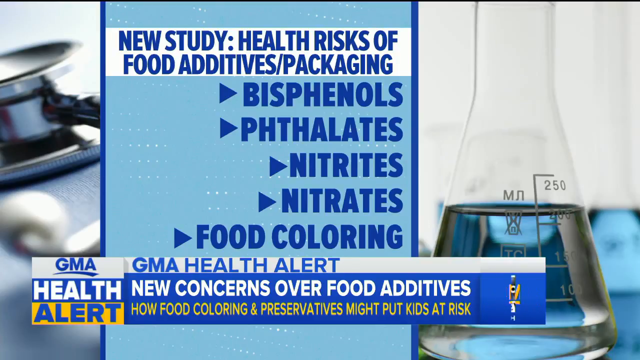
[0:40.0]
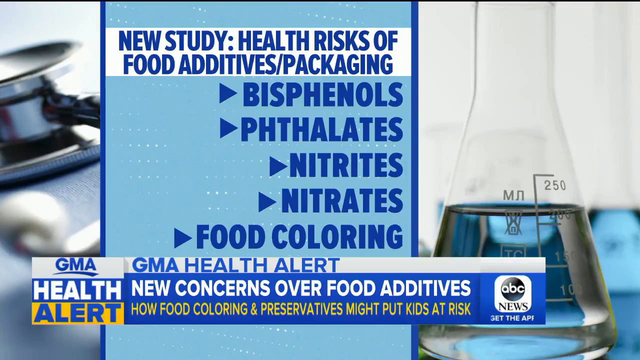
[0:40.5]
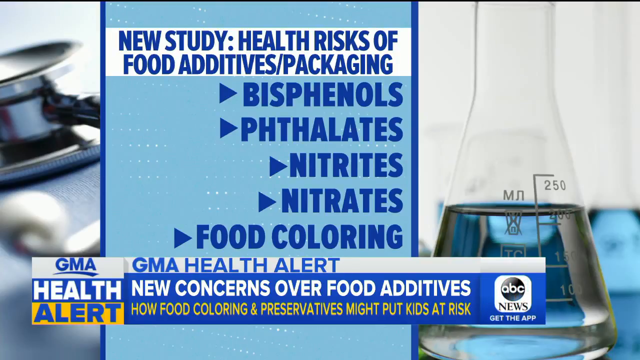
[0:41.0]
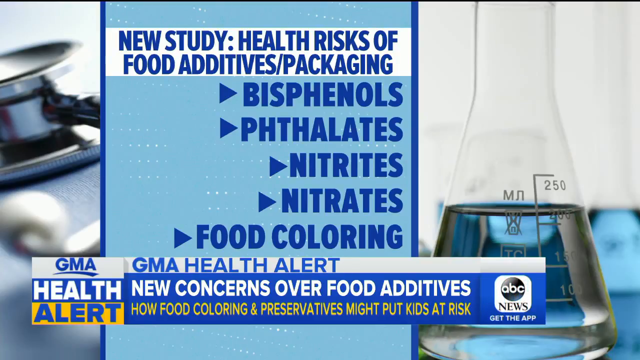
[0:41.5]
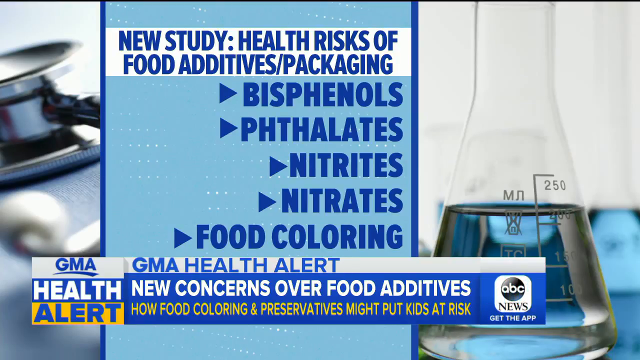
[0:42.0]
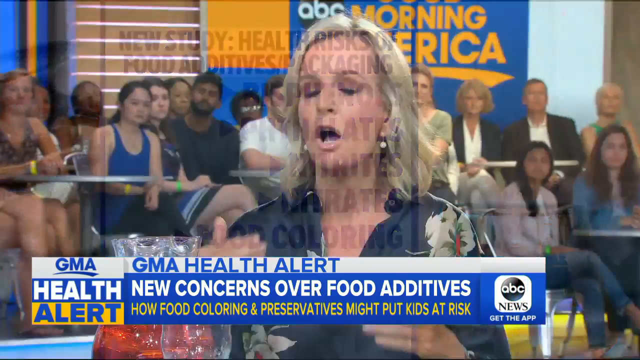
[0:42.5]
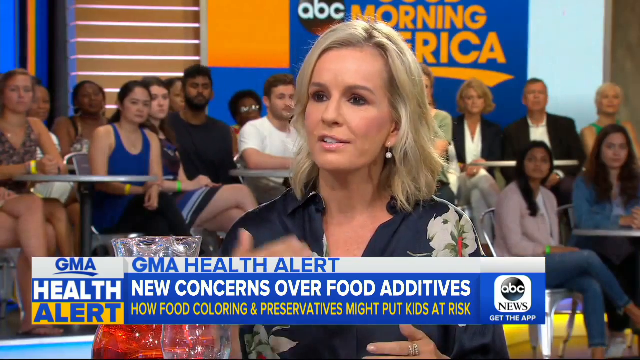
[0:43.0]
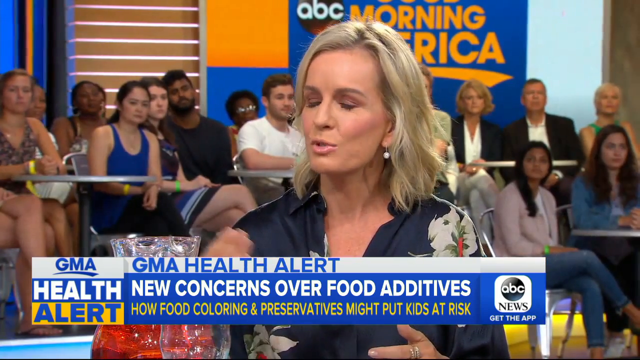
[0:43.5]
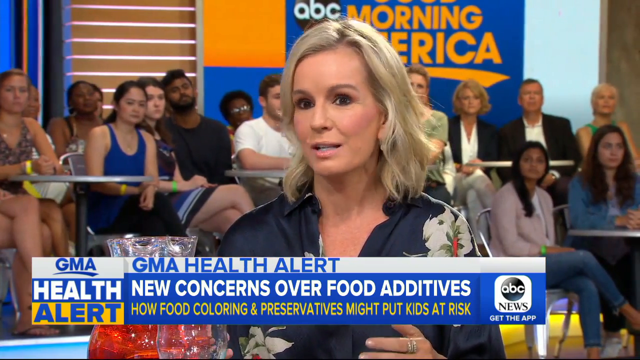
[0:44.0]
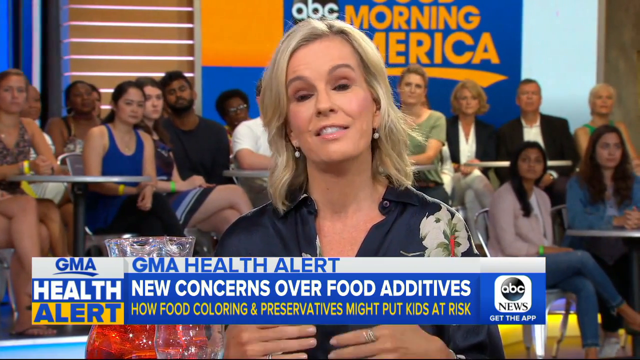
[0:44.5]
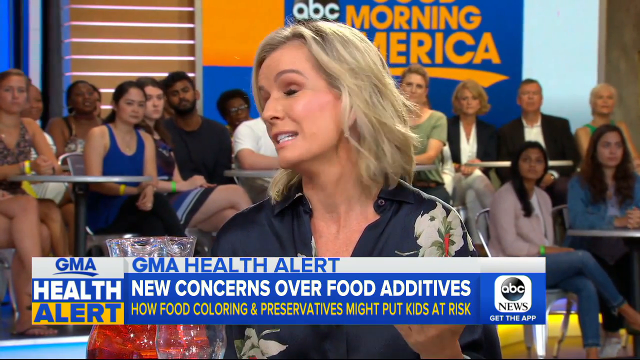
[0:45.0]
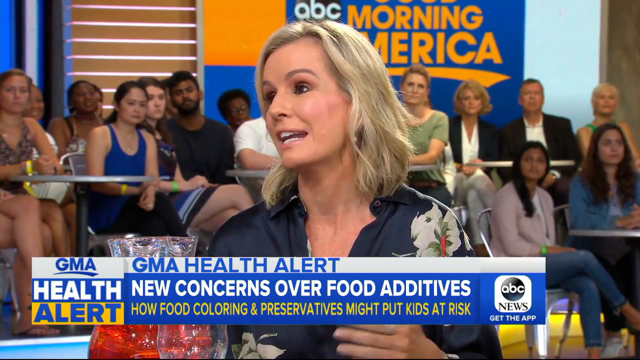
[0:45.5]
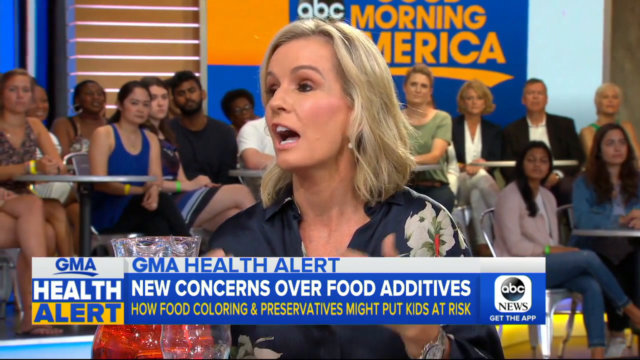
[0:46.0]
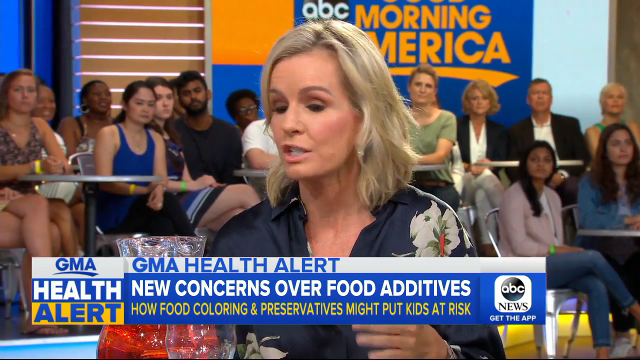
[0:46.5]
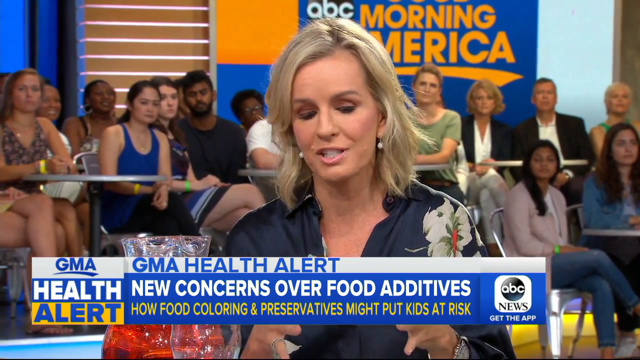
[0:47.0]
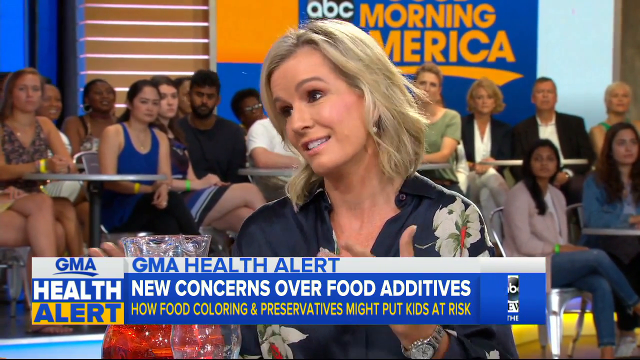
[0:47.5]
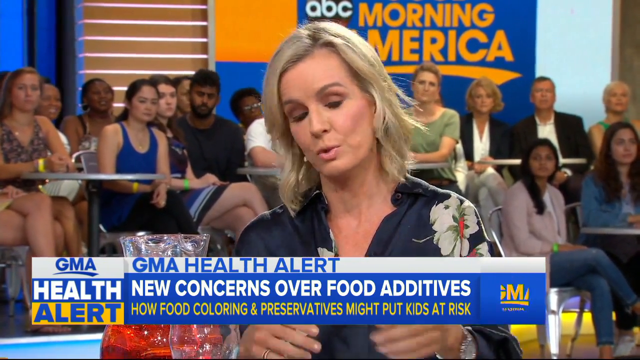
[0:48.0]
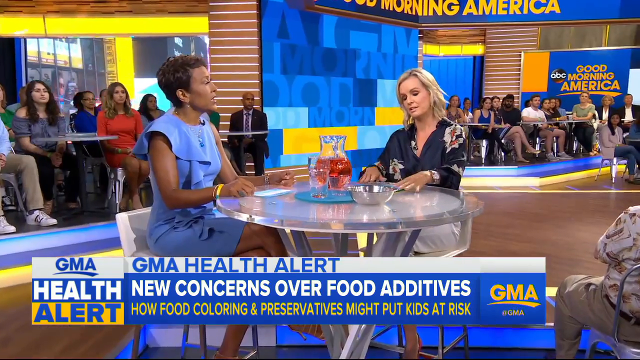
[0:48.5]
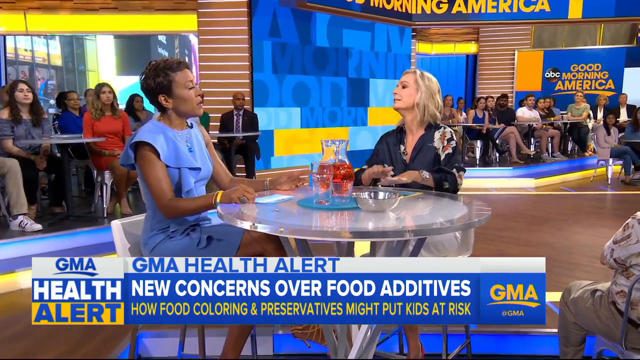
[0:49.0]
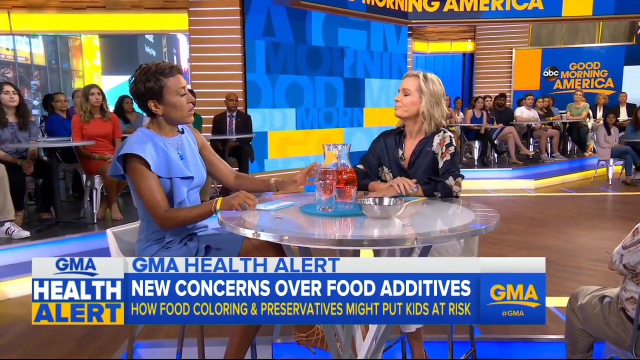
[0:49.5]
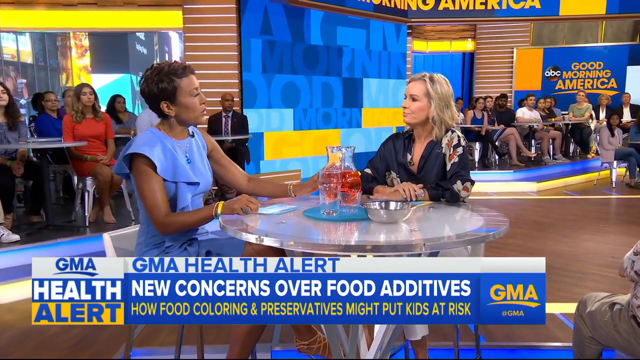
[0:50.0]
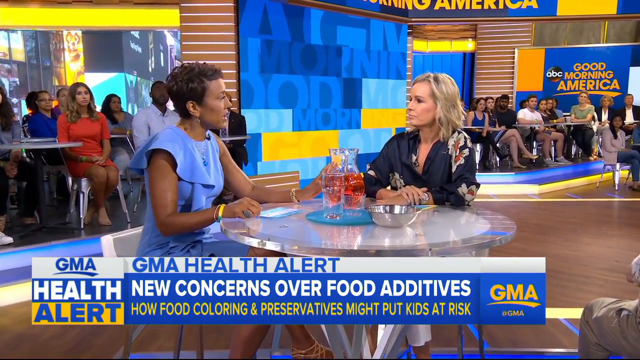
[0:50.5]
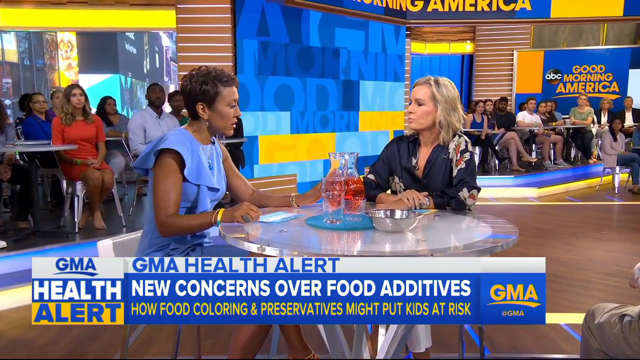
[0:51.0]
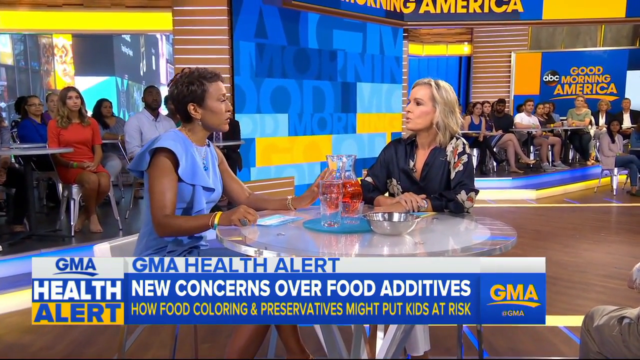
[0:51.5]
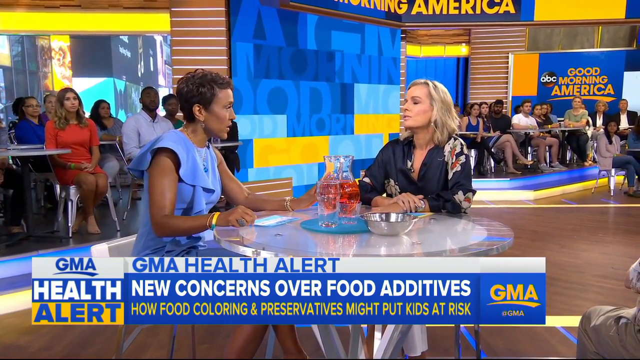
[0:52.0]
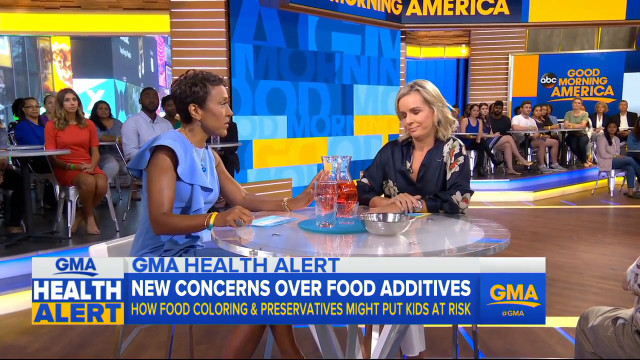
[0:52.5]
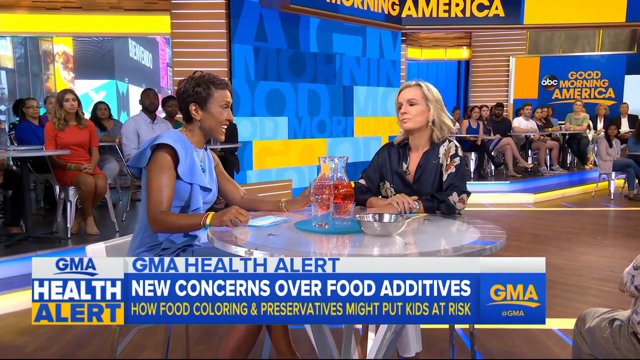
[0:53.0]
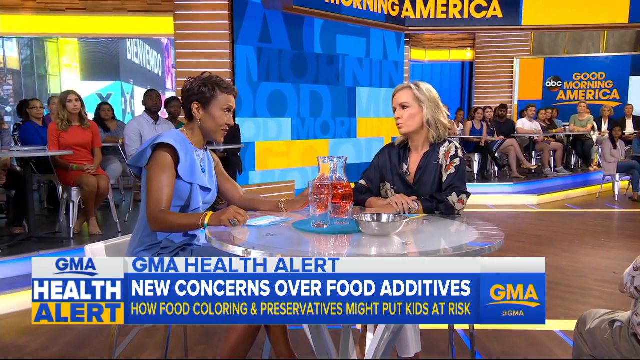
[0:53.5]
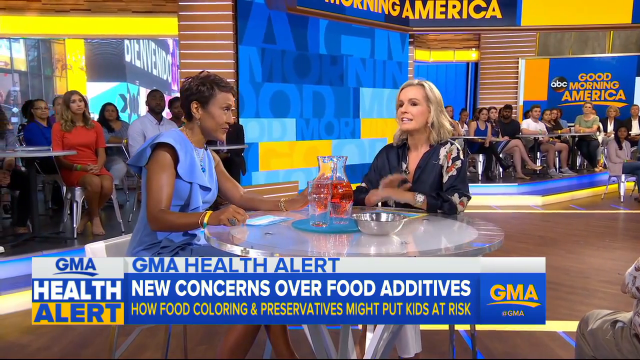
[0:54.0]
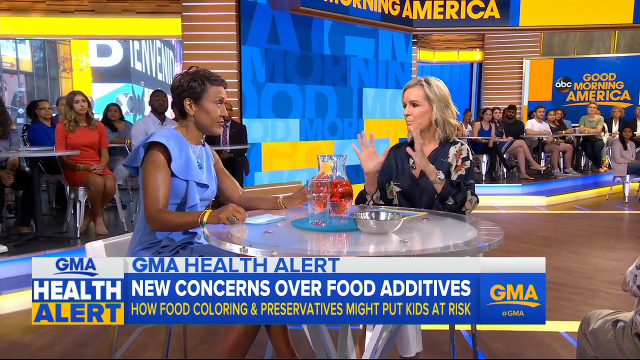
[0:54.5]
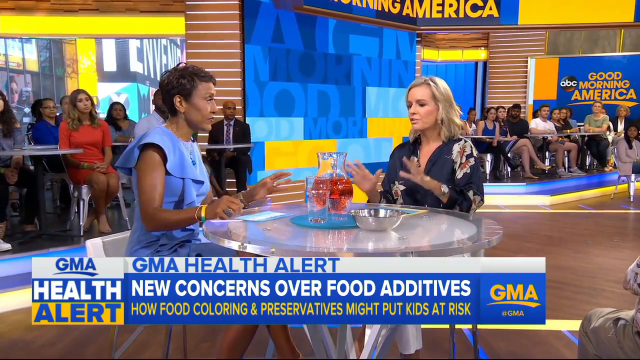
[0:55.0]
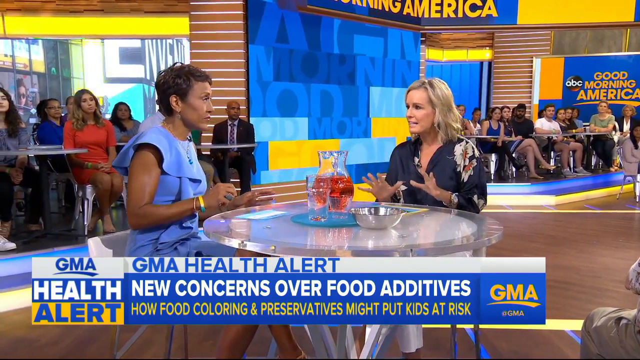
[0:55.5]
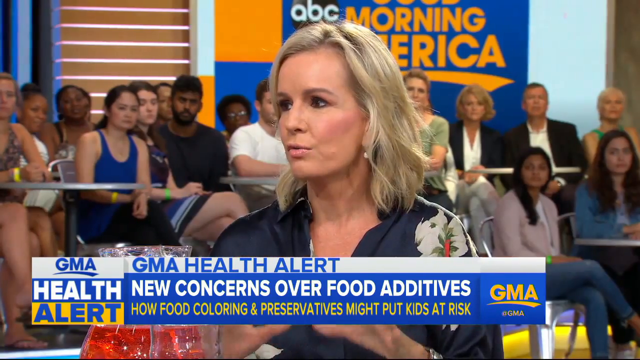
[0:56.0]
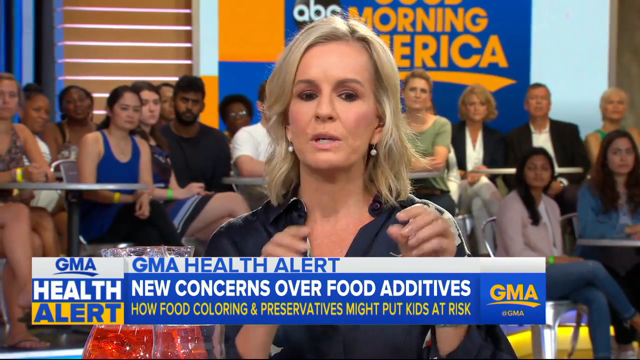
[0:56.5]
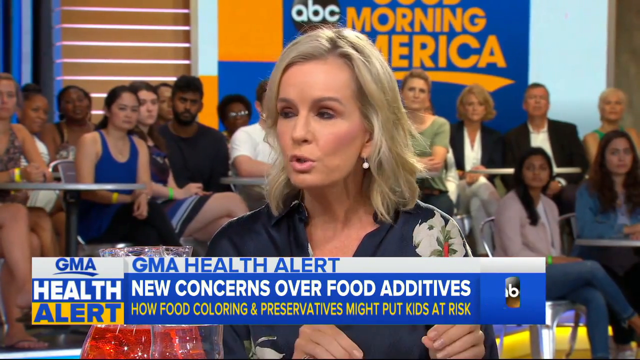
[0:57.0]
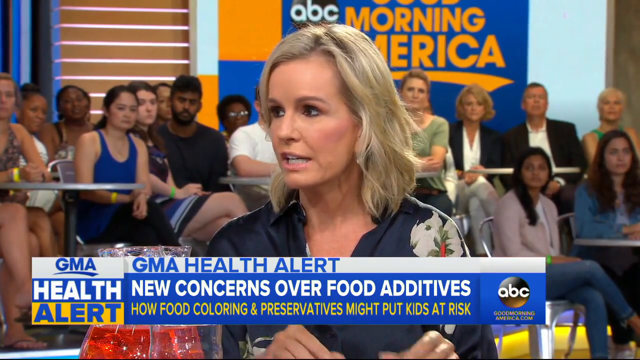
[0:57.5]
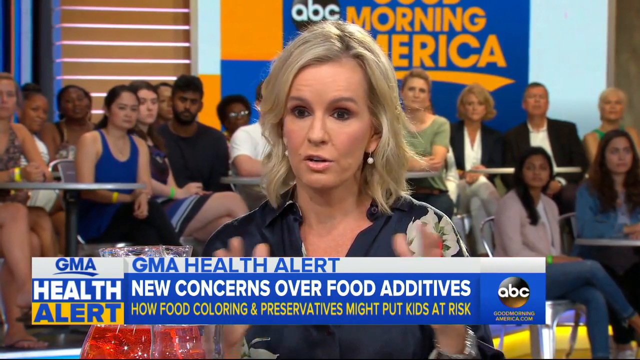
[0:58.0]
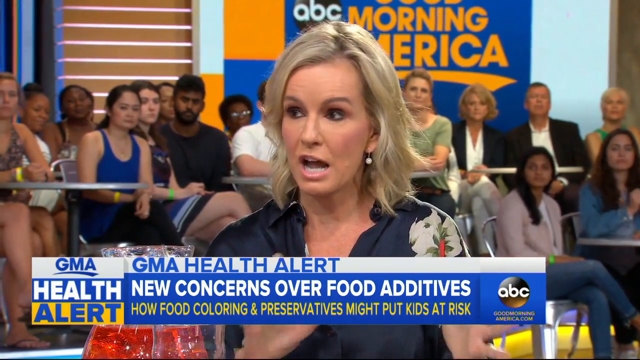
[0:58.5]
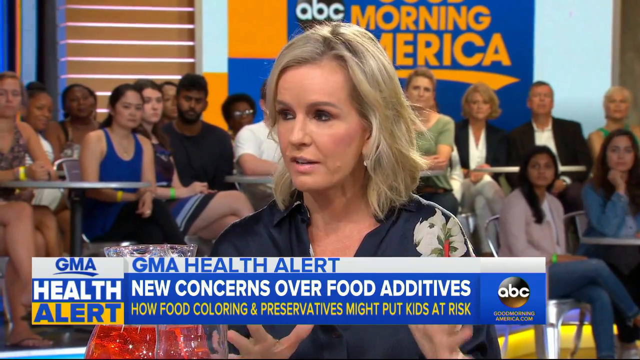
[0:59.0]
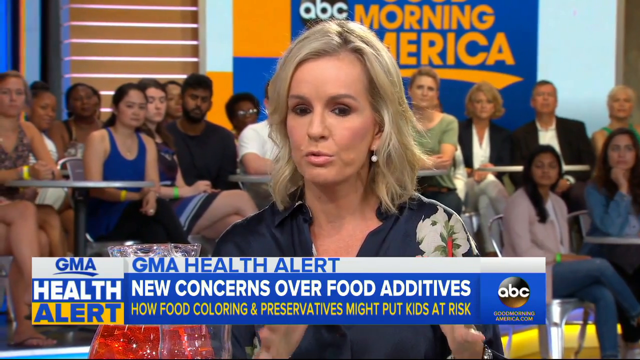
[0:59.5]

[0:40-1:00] The same image of the chemical beaker is on the right-hand side, with liquid filled between the 200 and 250 marks, alongside the text "new study health risks of food additives/packaging" and the list of additives. The video cuts back to the blonde-haired woman in the studio, who talks animatedly with her arms waving around, and then pulls back to show both women sat at the table. Between them are a glass, what looks like a silver bowl, and a large jug holding a pinky orange drink. Both women talk to each other, nodding and moving their hands around a lot while speaking. The people in the background are all looking at the two women. Signs reading "ABC Good Morning America" are up in the background.